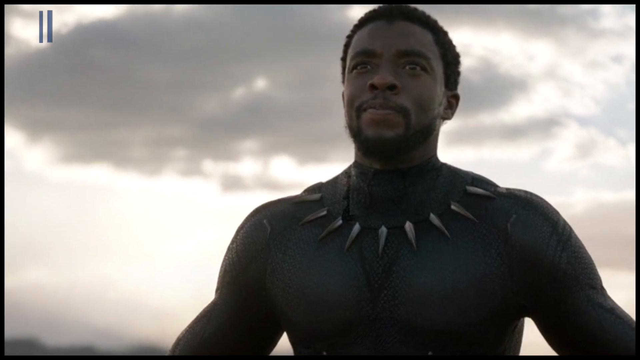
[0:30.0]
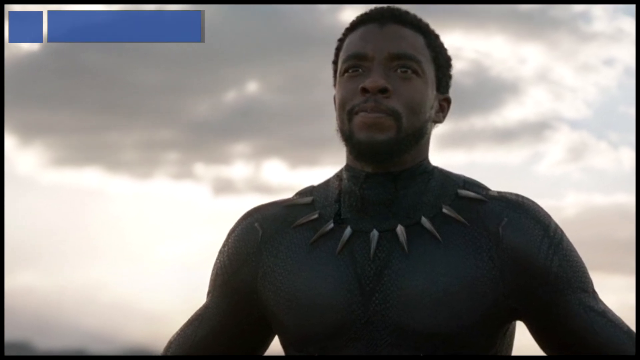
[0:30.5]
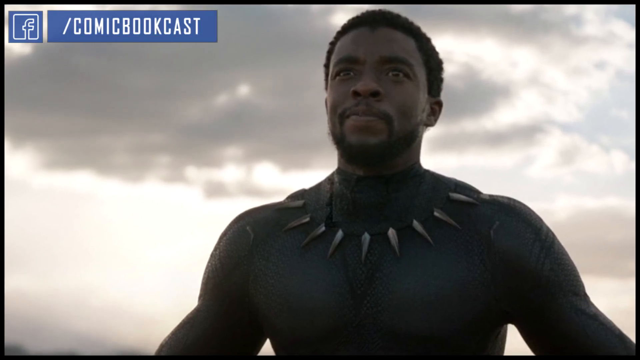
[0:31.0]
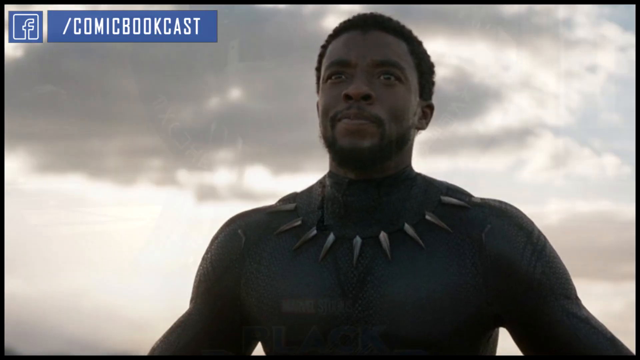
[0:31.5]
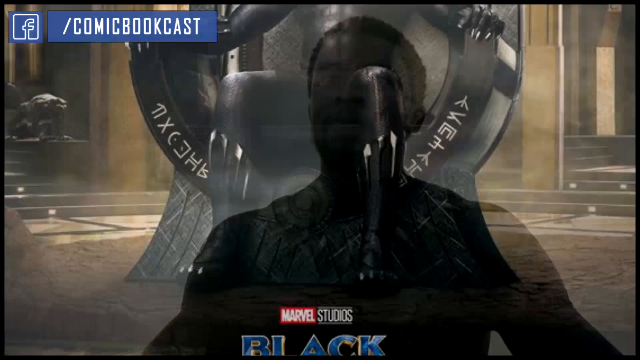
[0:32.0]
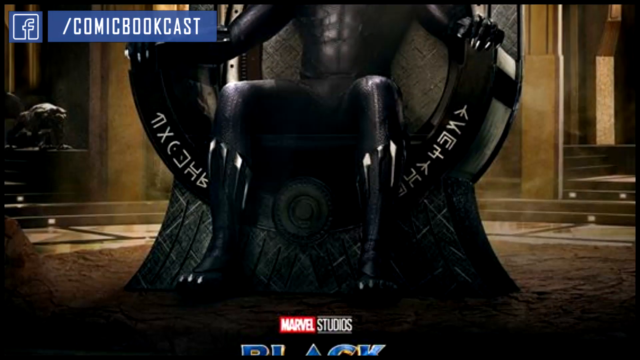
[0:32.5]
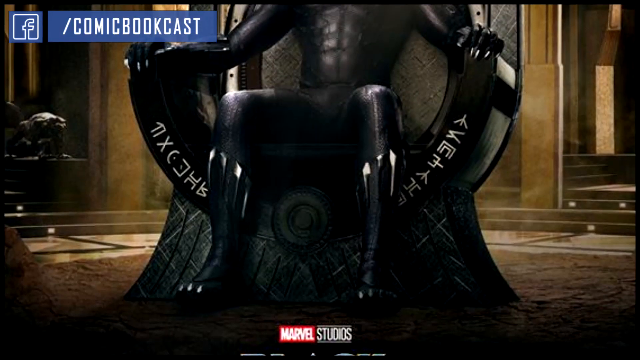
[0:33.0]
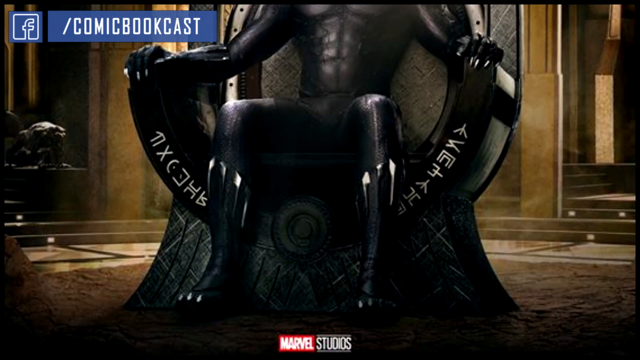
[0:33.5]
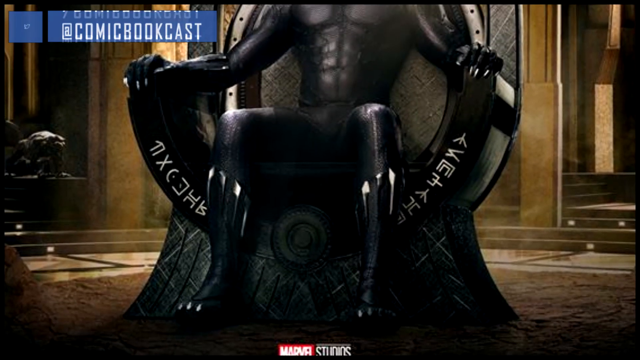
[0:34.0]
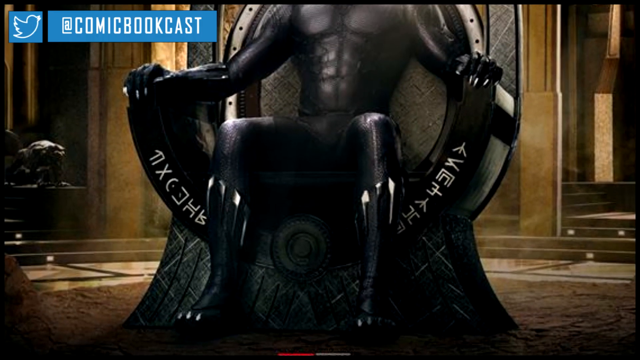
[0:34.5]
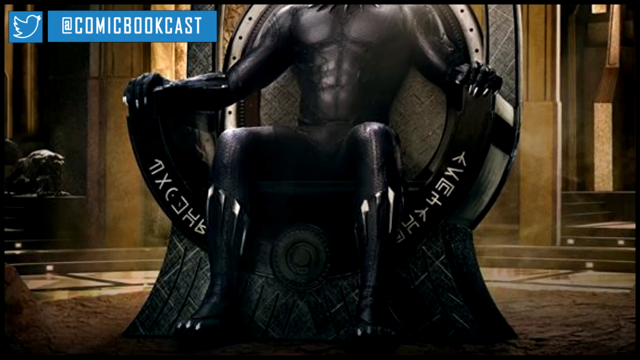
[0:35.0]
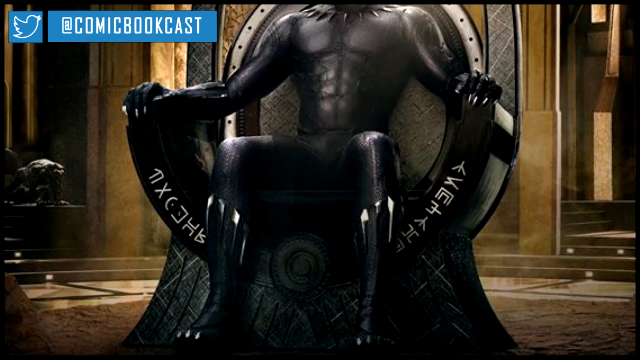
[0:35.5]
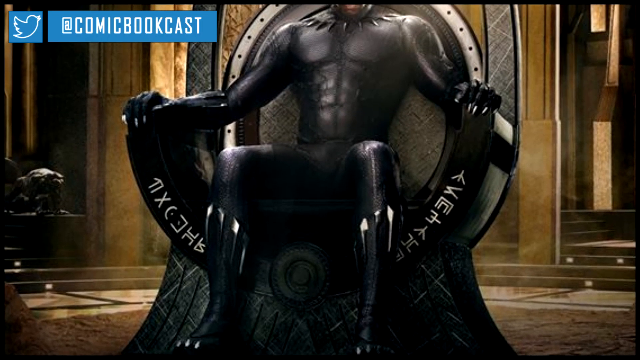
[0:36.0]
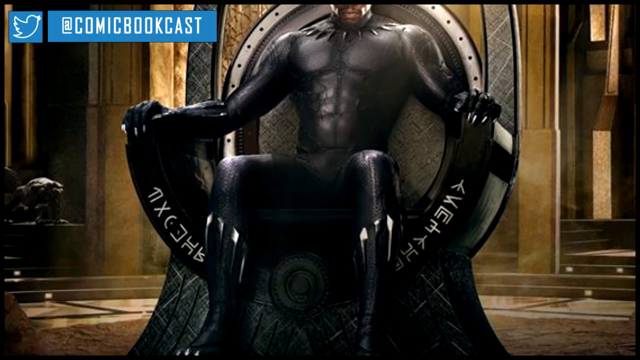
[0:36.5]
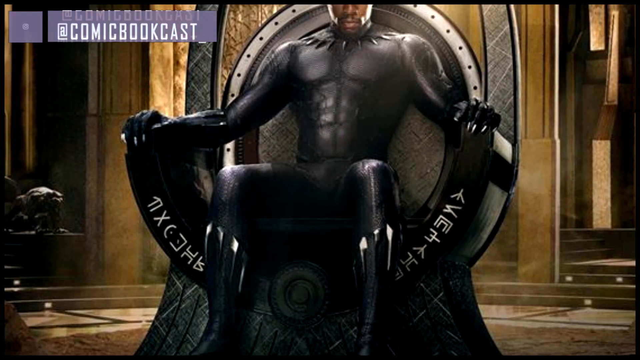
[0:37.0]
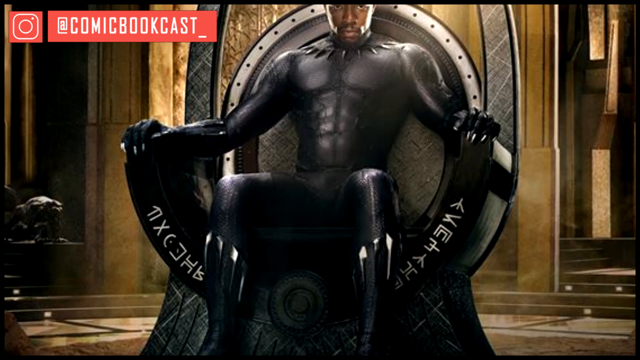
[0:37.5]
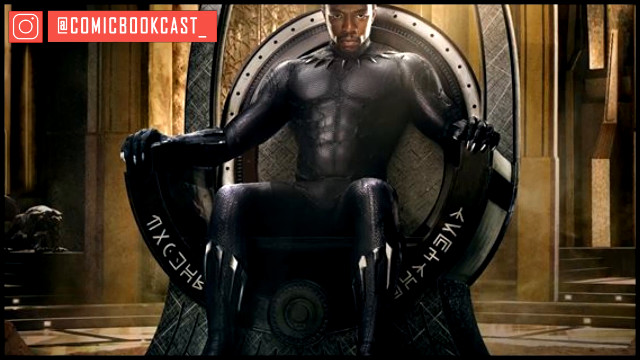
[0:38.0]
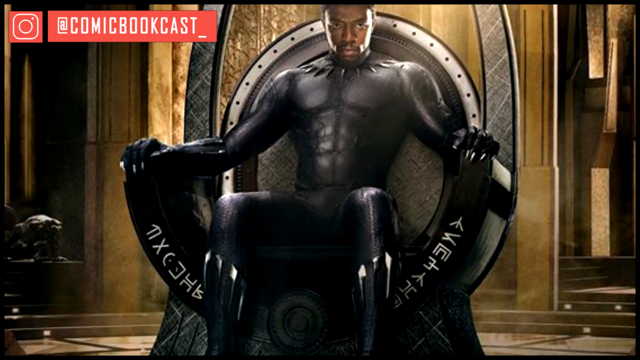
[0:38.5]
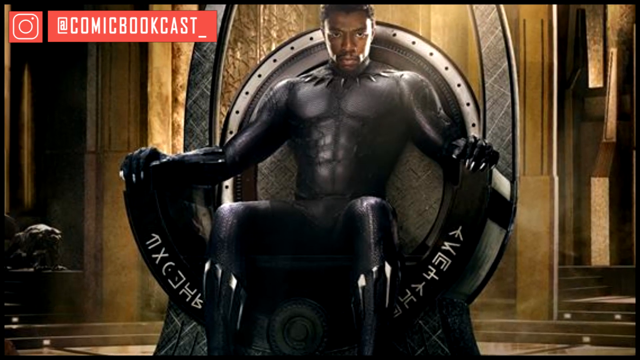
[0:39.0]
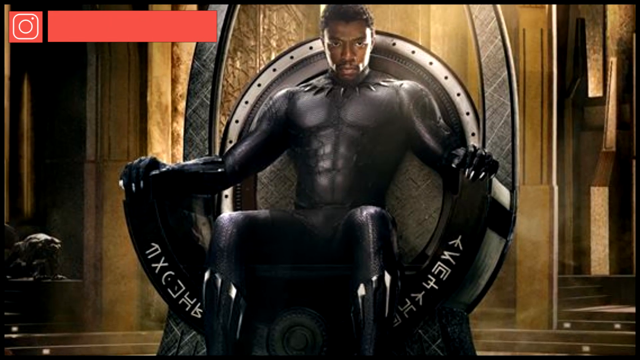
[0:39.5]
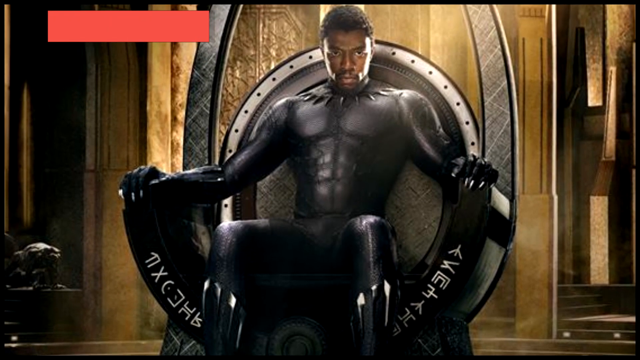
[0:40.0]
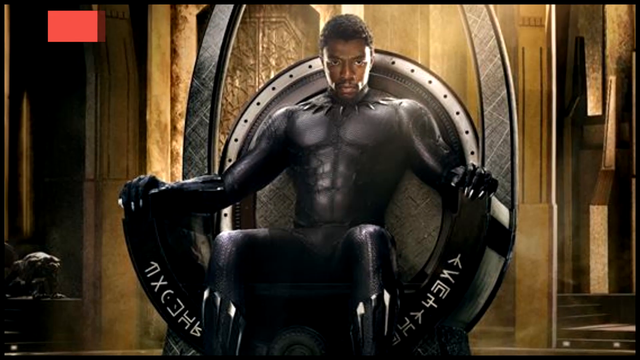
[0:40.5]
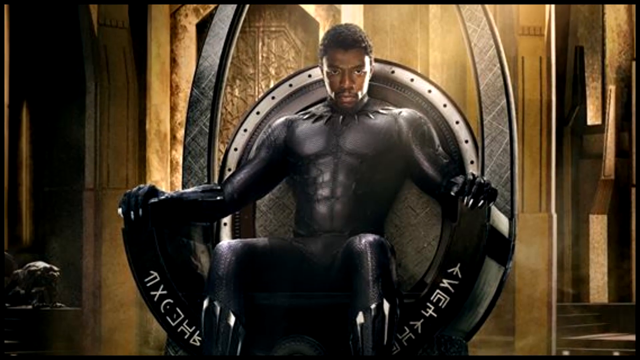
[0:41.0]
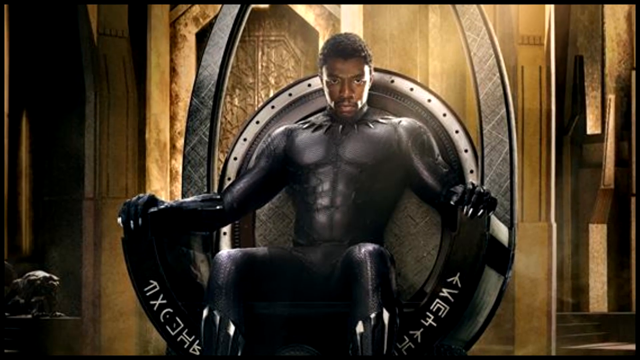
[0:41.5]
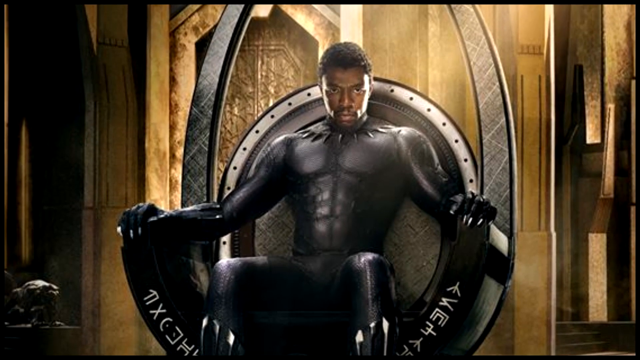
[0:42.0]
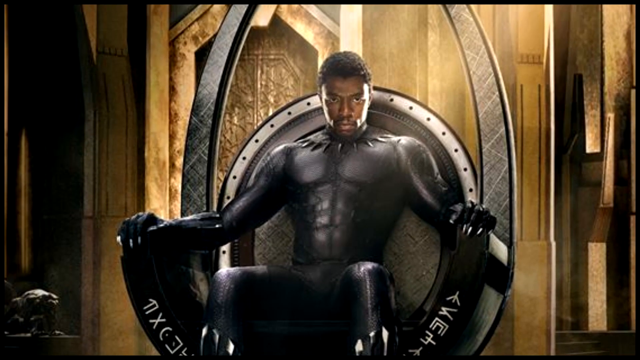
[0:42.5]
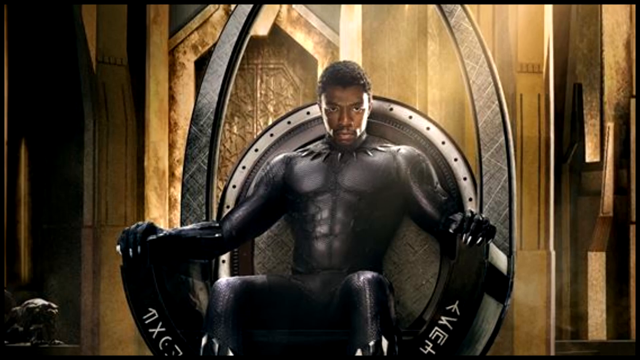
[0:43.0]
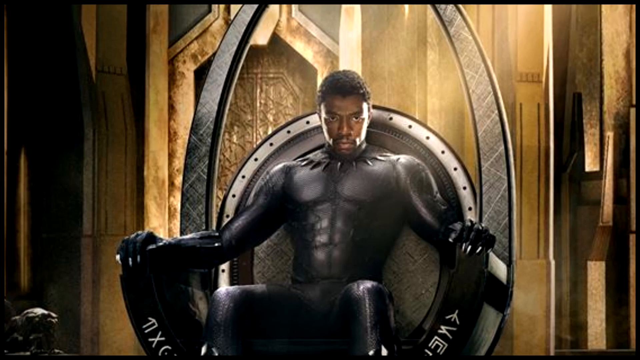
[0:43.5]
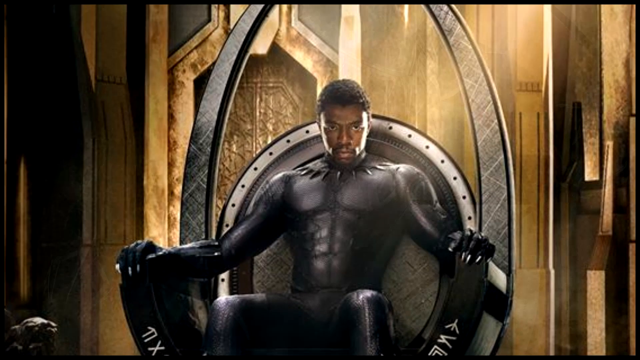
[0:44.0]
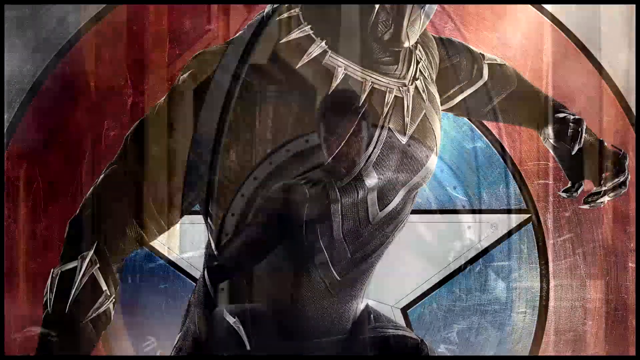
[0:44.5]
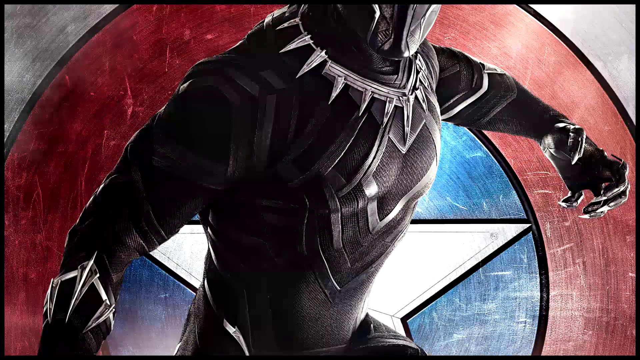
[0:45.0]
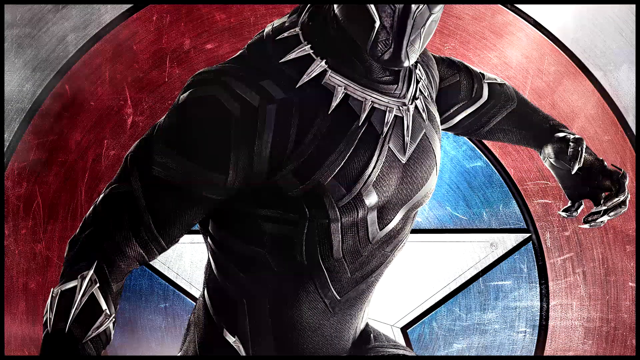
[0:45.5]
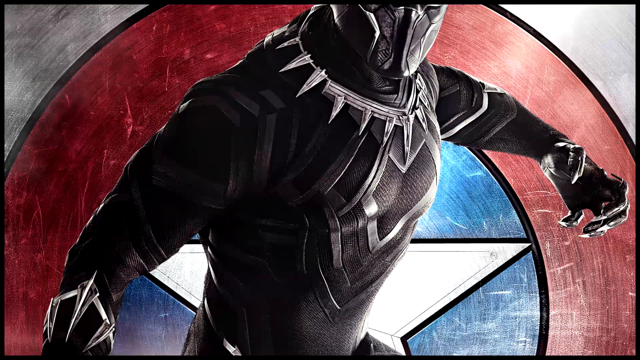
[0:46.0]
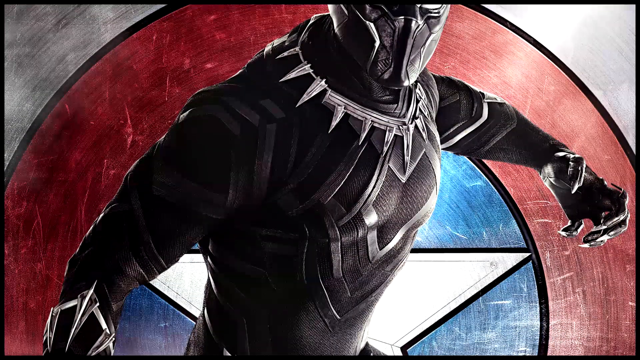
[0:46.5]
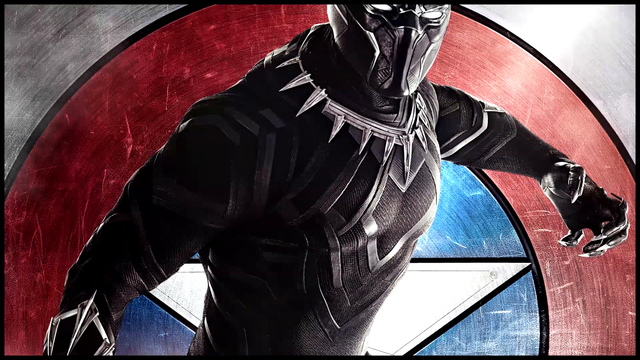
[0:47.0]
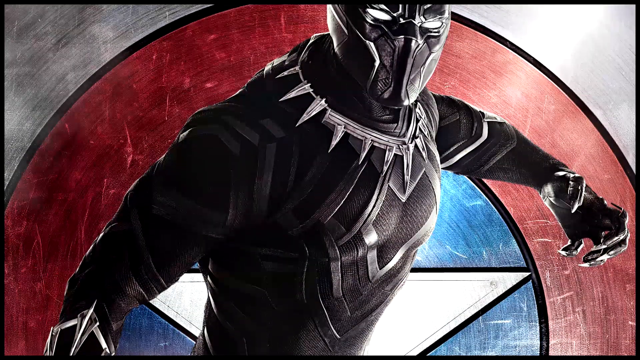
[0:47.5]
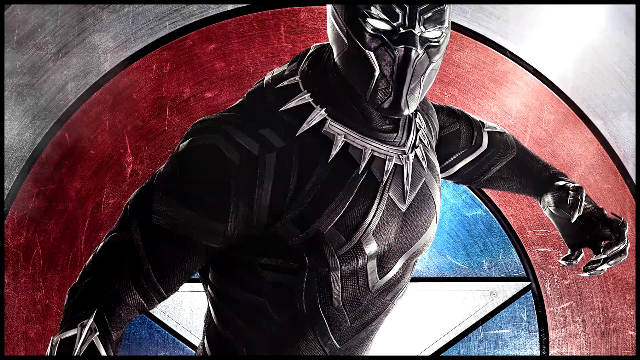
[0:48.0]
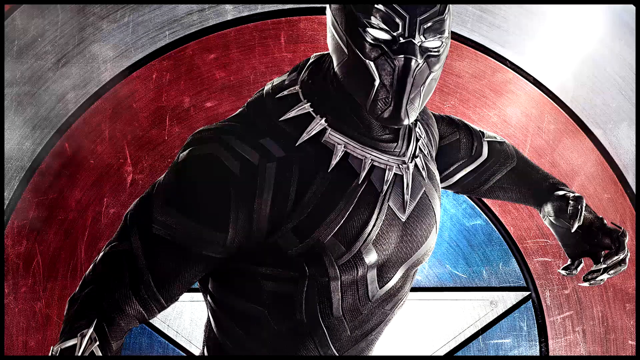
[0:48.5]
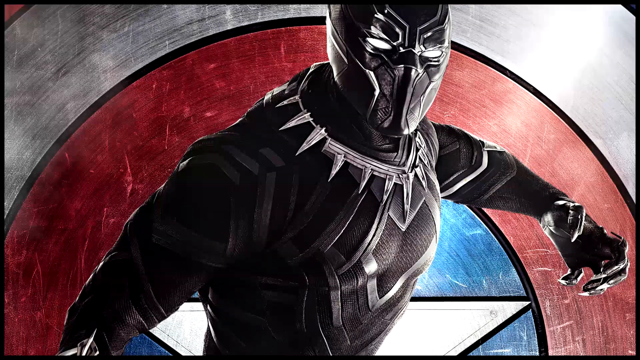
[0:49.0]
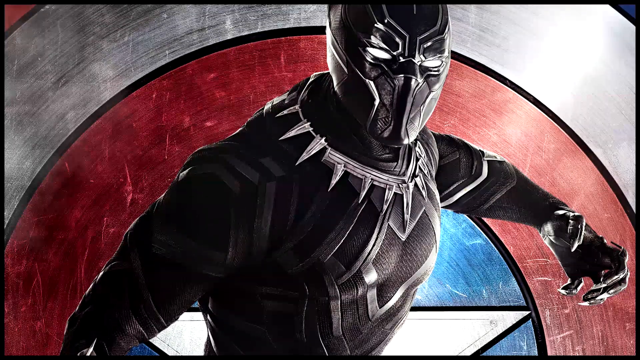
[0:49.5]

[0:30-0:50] A picture shows the actor Chadwick Boseman looking up toward the left-hand side of the screen. He wears a necklace with bone spears or teeth coming off it, which look white. He is shirtless and very muscular, and he looks curious and pensive as he gazes up at the sky. The sky behind him has some gray clouds, with light visible behind them. The words "comic book cast" appear with the Facebook icon in blue, followed by the Twitter icon and then the Instagram icon in red. Next, Chadwick Boseman sits in a large chair that looks metallic and almost like a throne. An oval loop is behind him, against a black or brown wall with intricate designs. He looks down at the camera. He wears a black rubber suit from the neck down that accentuates his muscles and physique, and long white claws are coming out as well. He looks a little intimidating. Then the costumed character appears with the mask on, against the classic red, white and blue trademark image associated with Marvel Comics.